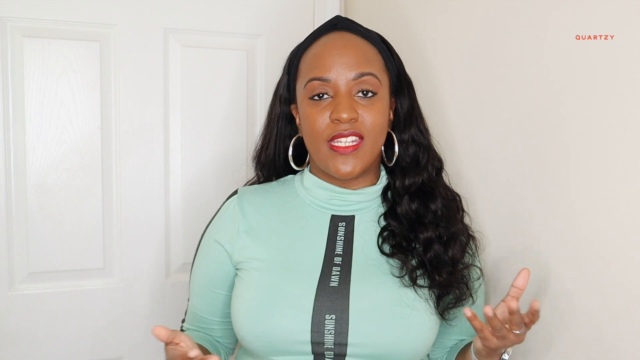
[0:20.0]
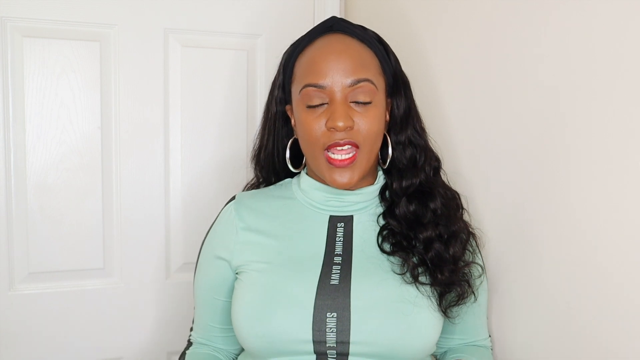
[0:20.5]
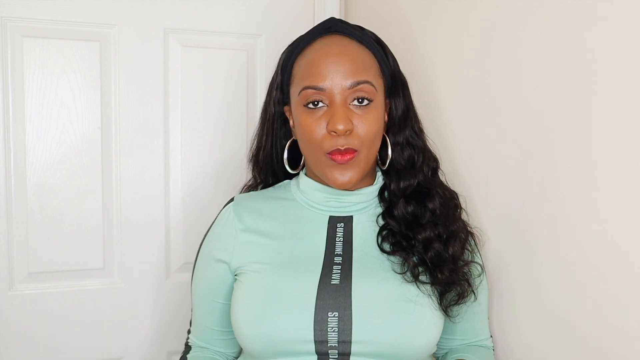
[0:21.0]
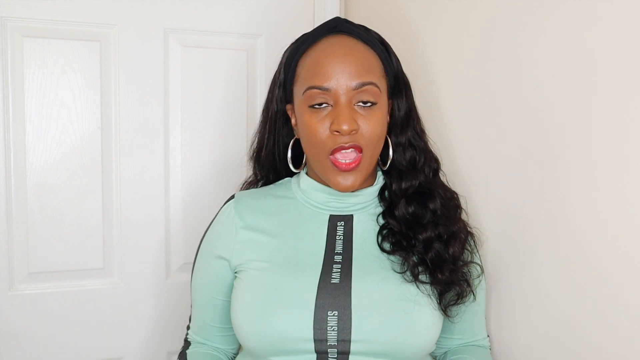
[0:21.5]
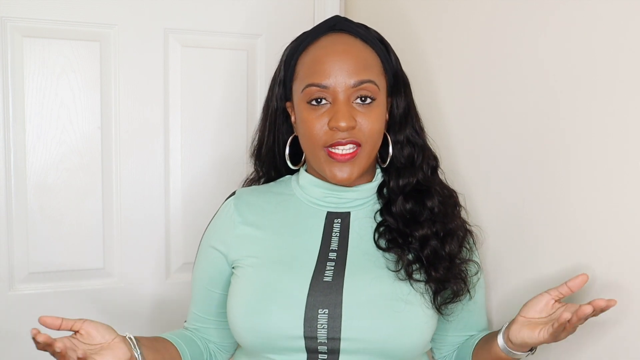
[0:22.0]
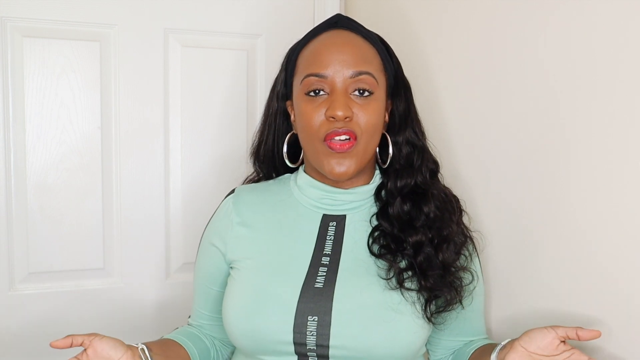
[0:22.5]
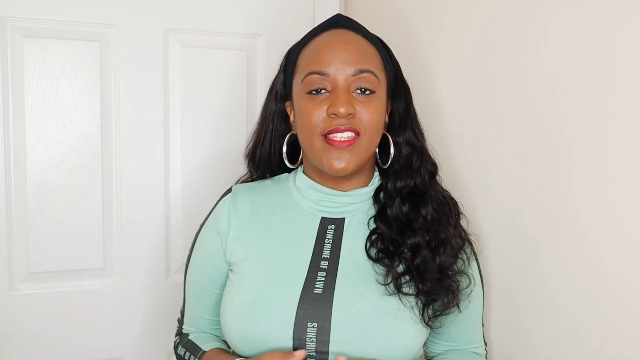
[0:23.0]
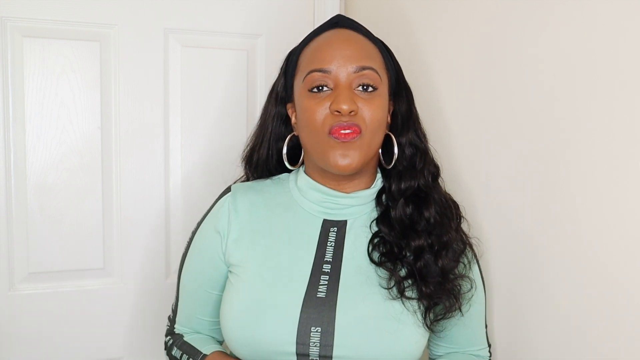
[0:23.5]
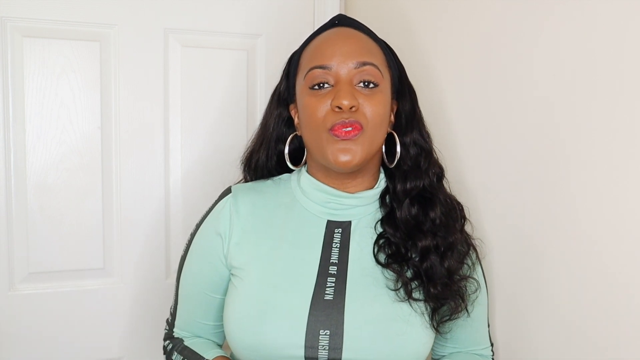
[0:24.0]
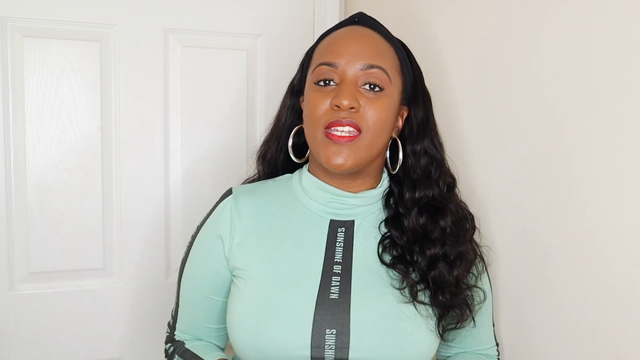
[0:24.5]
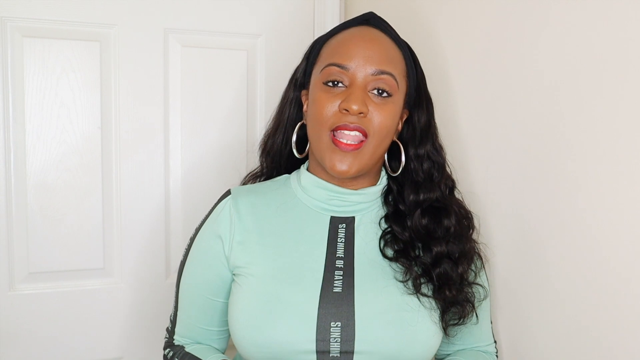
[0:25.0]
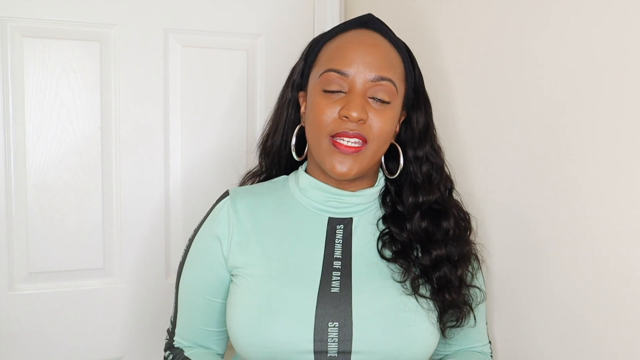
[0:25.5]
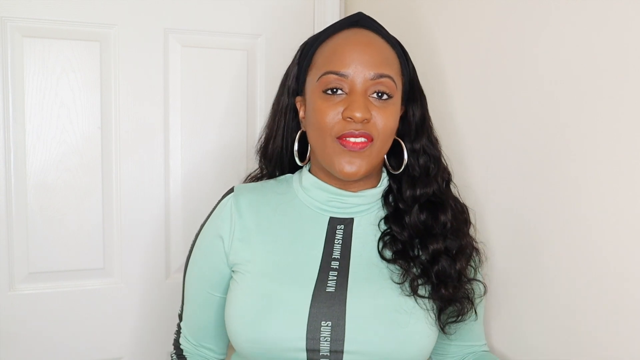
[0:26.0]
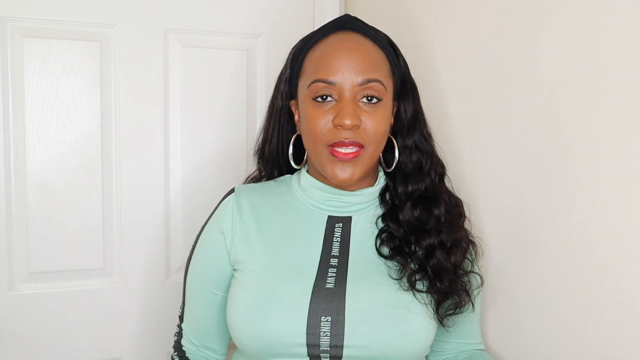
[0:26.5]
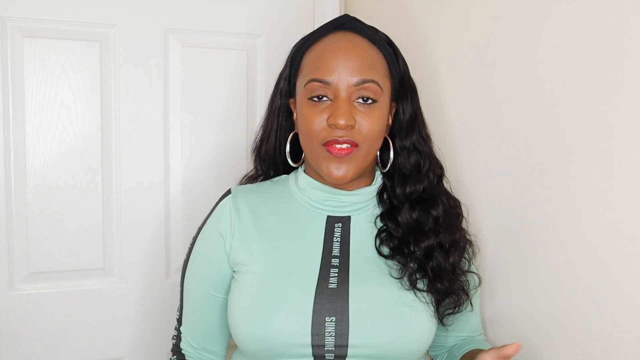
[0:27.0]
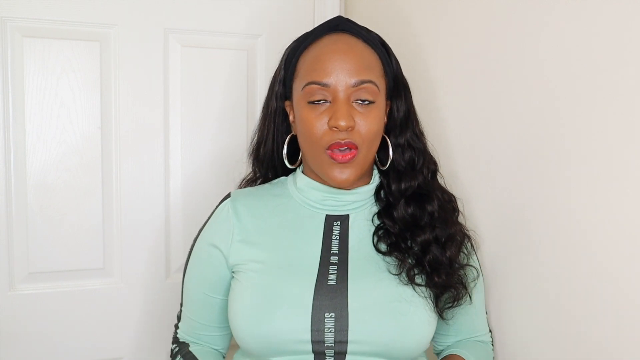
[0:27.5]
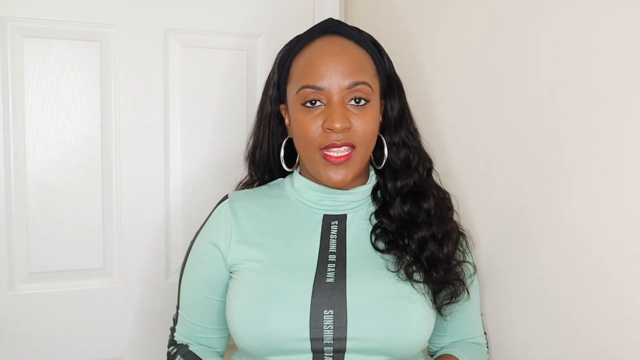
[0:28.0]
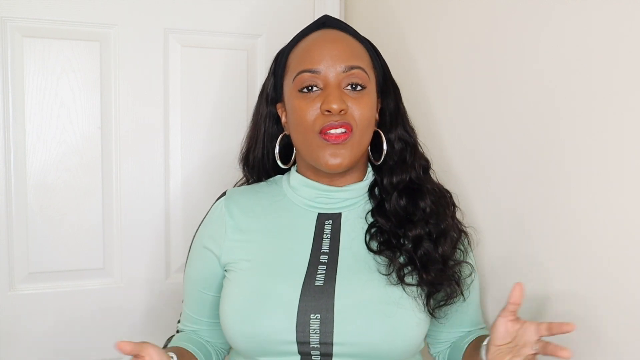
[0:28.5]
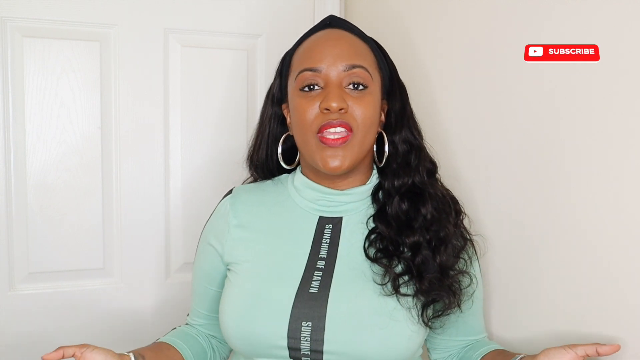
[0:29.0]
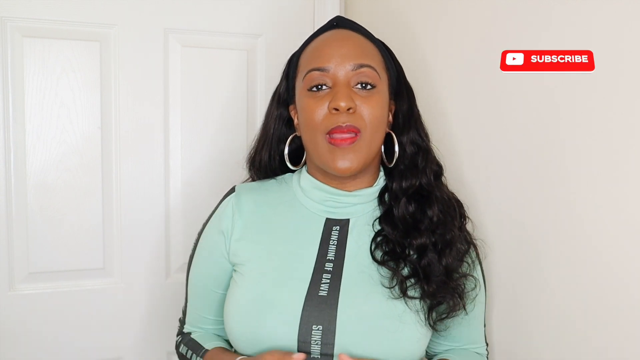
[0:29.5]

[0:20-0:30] The same woman is in front of her white background, a white wall with a white door. She wears the same tight, long-sleeve teal shirt with kind of a mock turtleneck and a black band down the center with writing on it that is hard to make out; matching bands also run from her shoulders down the sides of her arms. She has silver earrings, full makeup with red lipstick, and a black headband keeping her hair off her face. Her jet-black hair is curled, with part of it behind her shoulder and the other part over her shoulder and past it. She talks to the camera very animatedly, moving her hands and body. A "subscribe" prompt comes in from the right, and text in the right corner tells viewers to subscribe to her channel.